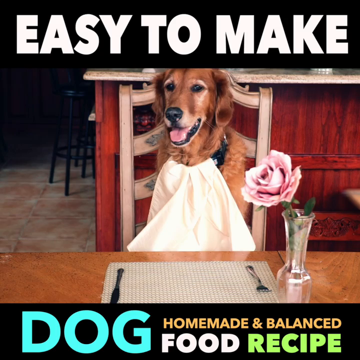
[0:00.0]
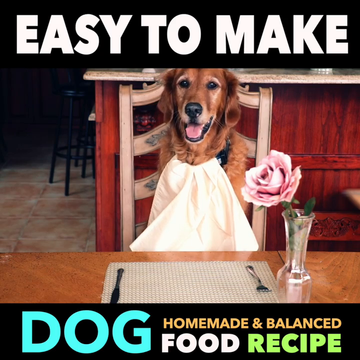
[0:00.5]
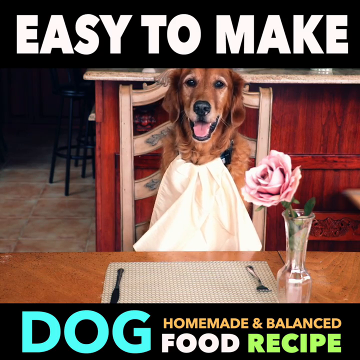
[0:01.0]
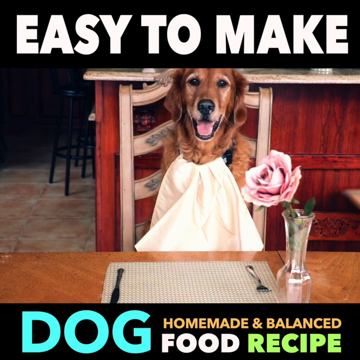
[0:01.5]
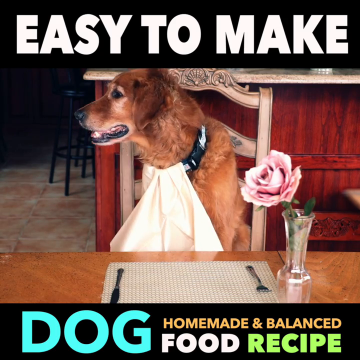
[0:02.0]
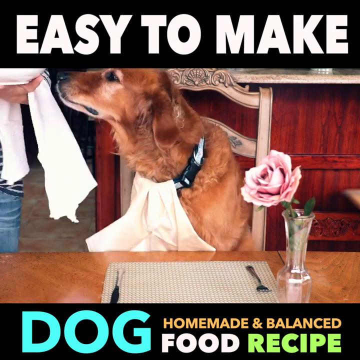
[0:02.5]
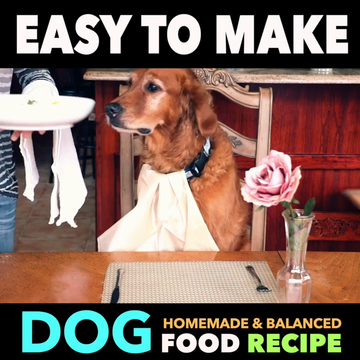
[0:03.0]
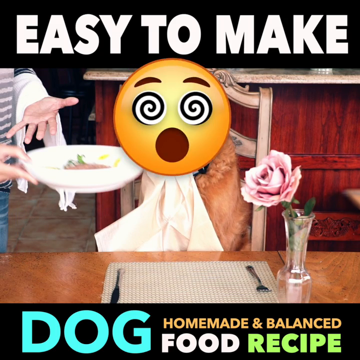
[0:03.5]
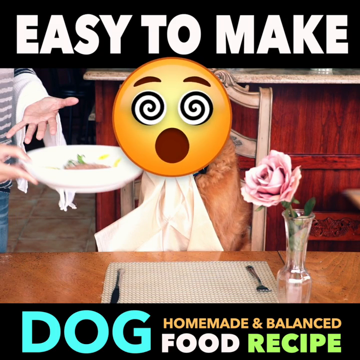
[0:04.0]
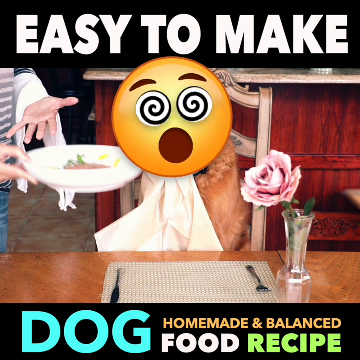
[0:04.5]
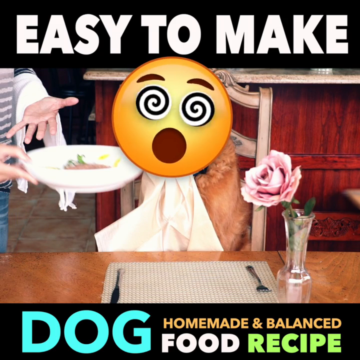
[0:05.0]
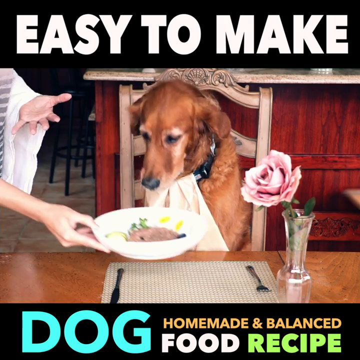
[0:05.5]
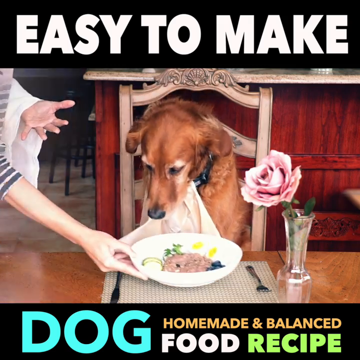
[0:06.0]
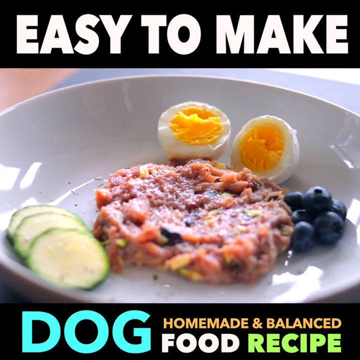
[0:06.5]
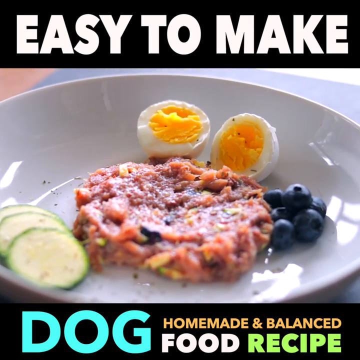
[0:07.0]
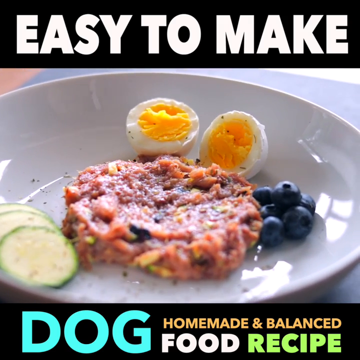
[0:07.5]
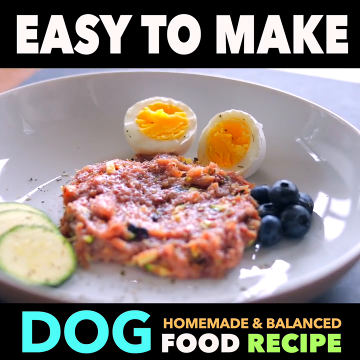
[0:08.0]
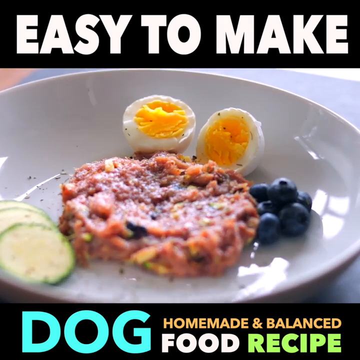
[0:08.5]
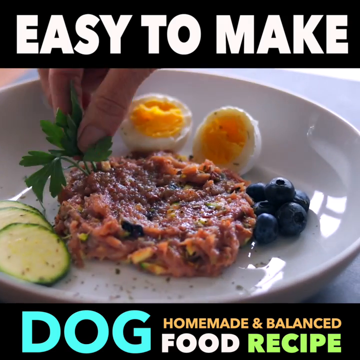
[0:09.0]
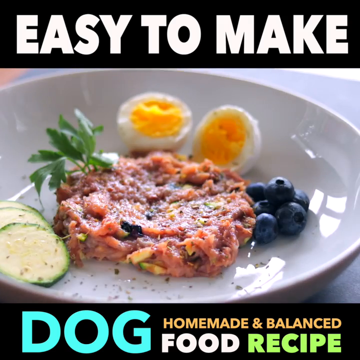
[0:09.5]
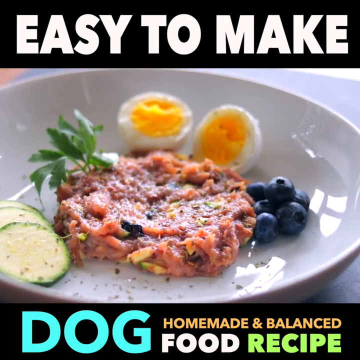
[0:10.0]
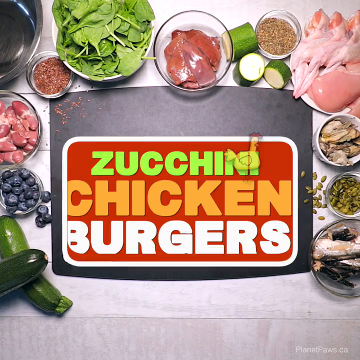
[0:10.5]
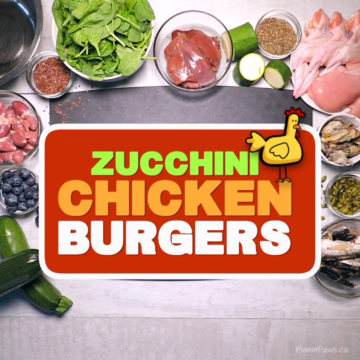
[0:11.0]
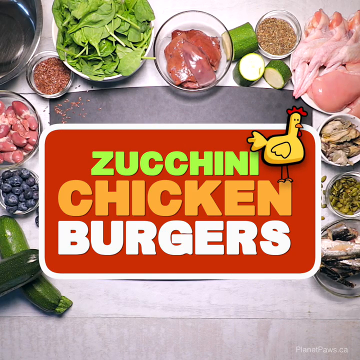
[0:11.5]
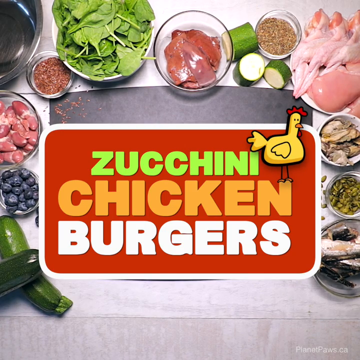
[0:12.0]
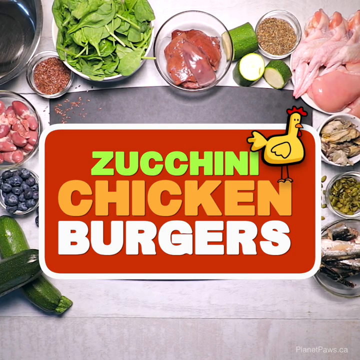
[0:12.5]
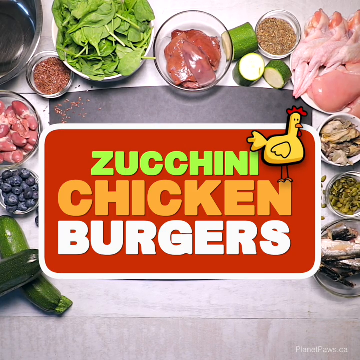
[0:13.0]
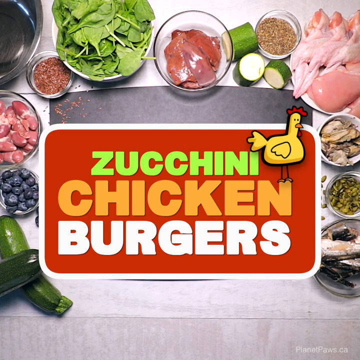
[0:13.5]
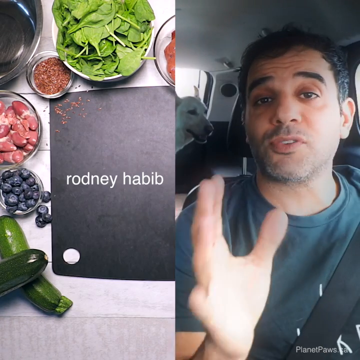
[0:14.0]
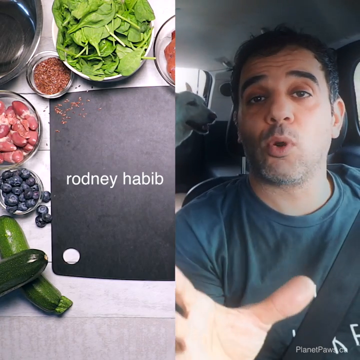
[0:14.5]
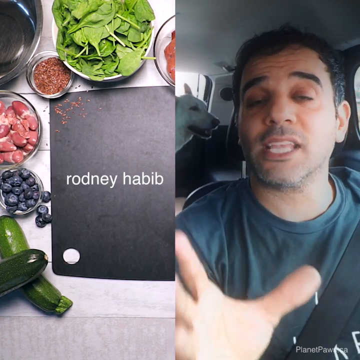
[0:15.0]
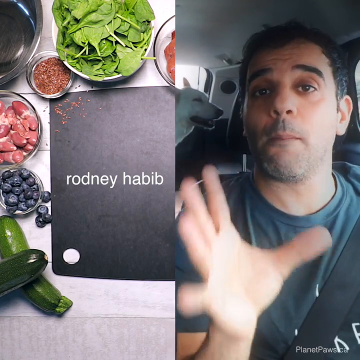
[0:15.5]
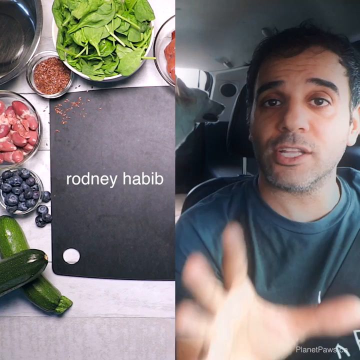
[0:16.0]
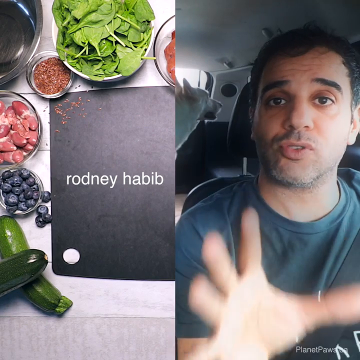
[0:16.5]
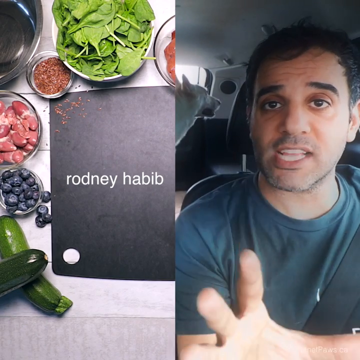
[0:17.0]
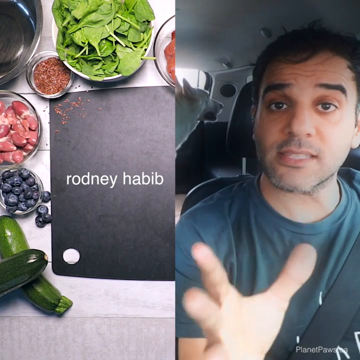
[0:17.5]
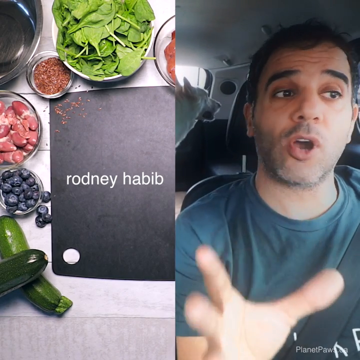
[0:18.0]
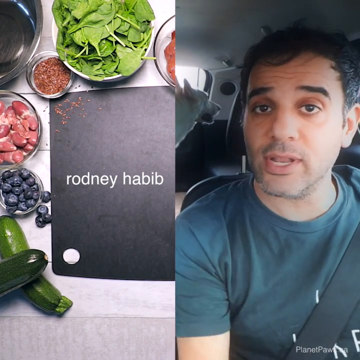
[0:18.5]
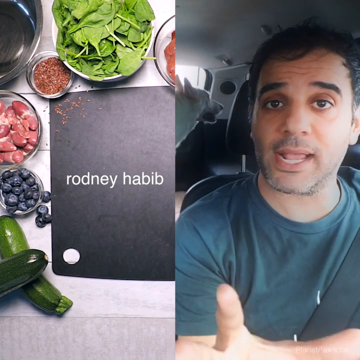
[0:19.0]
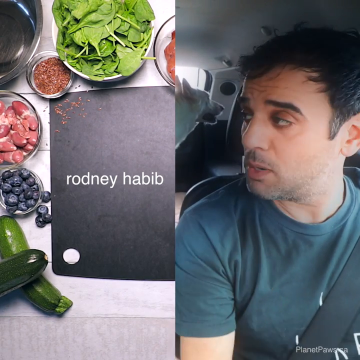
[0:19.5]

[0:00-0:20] What looks like a dog at a table opens a recipe for homemade, balanced dog food. The on-screen text says "zucchini chicken burgers." Rodney Habib is in his car, talking. A dish is put down in front of a golden retriever; it holds two hard-boiled eggs, some blueberries, a chicken burger and some cucumbers. The burger presumably contains chicken and zucchini, and the plate is garnished for the dog.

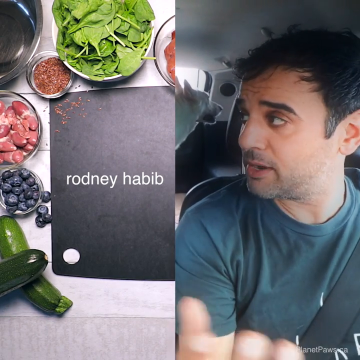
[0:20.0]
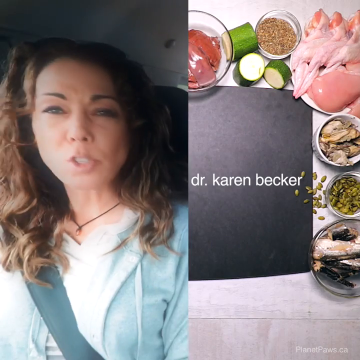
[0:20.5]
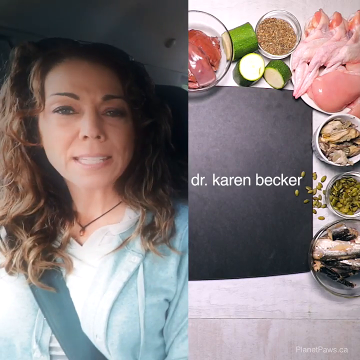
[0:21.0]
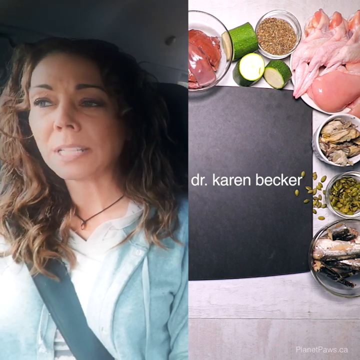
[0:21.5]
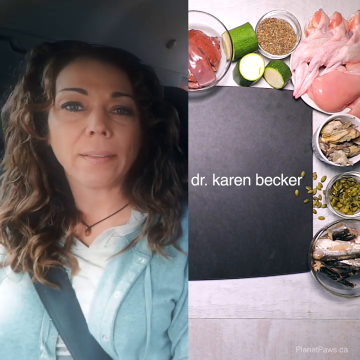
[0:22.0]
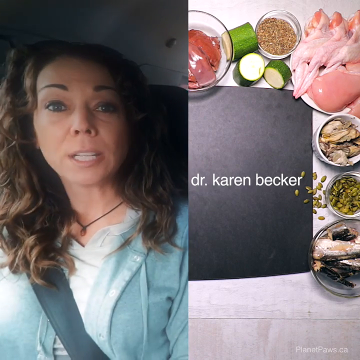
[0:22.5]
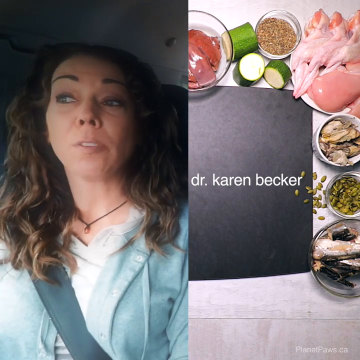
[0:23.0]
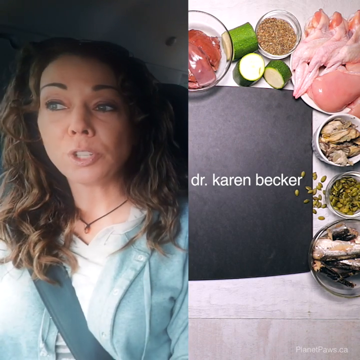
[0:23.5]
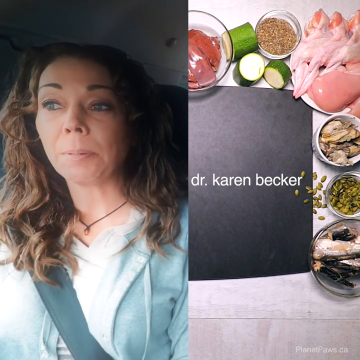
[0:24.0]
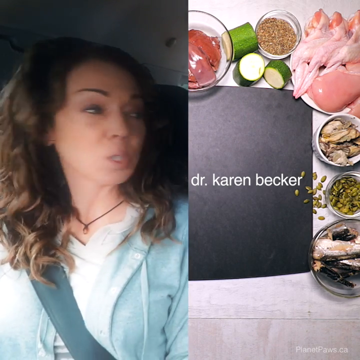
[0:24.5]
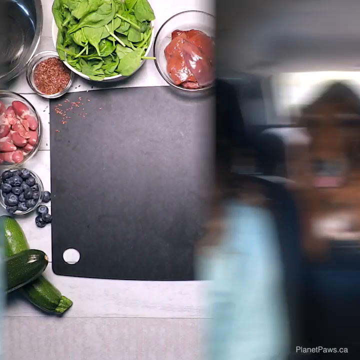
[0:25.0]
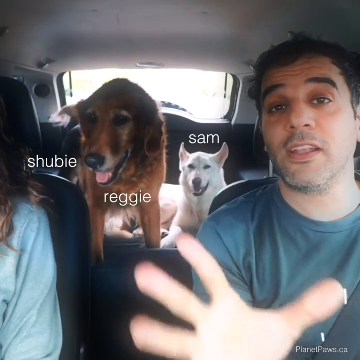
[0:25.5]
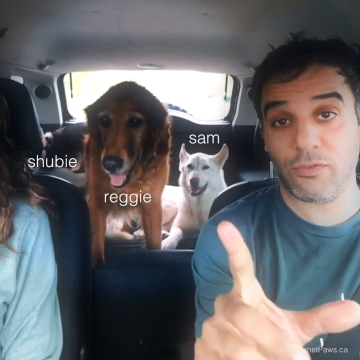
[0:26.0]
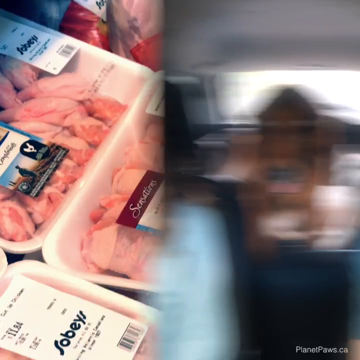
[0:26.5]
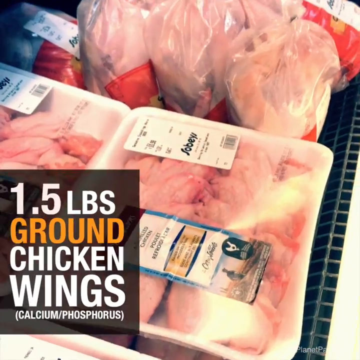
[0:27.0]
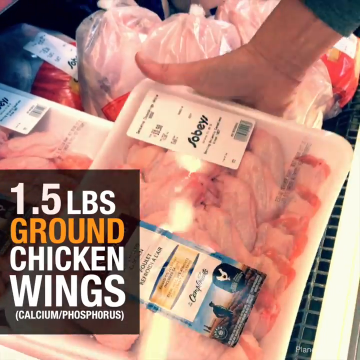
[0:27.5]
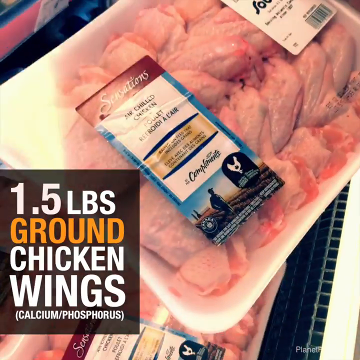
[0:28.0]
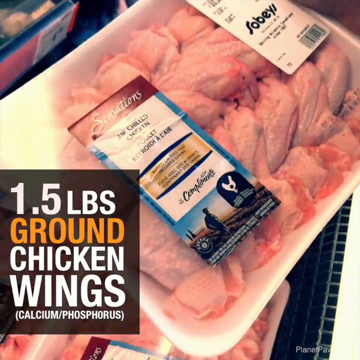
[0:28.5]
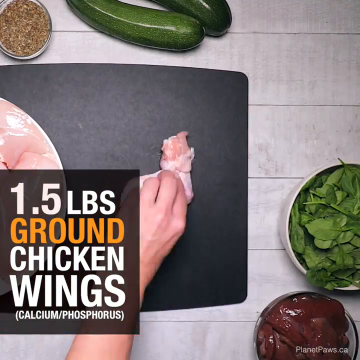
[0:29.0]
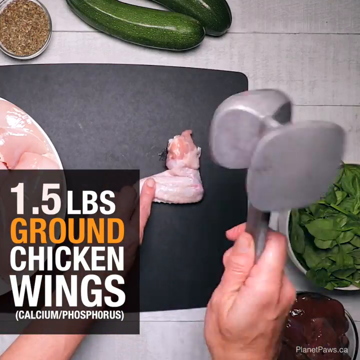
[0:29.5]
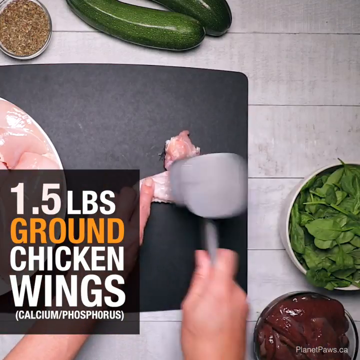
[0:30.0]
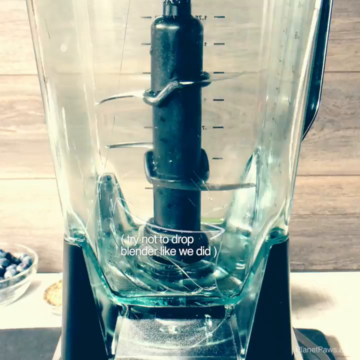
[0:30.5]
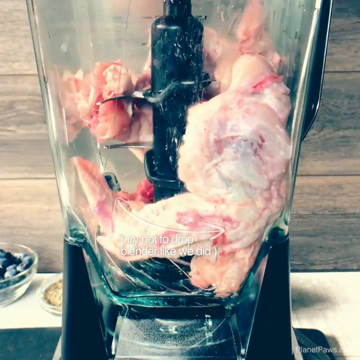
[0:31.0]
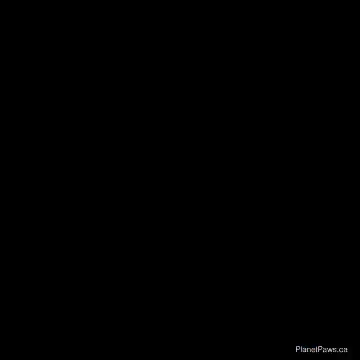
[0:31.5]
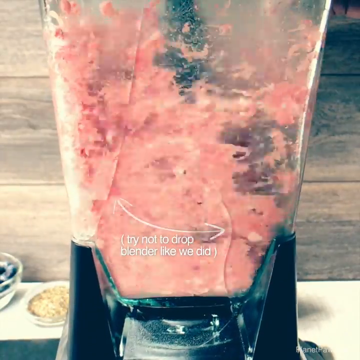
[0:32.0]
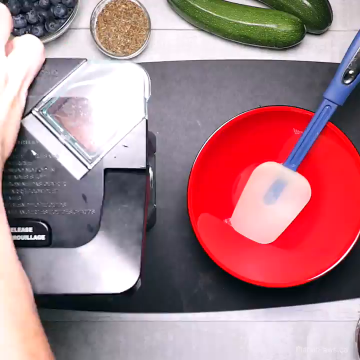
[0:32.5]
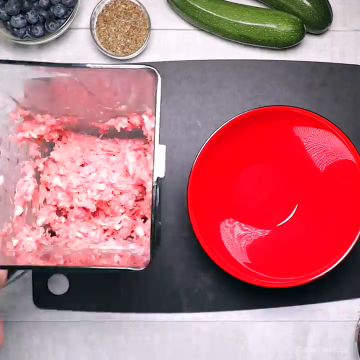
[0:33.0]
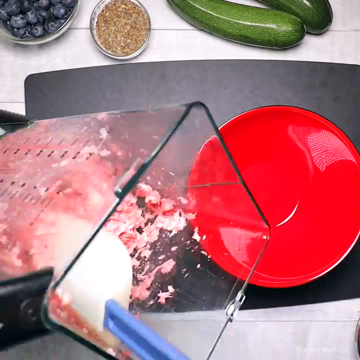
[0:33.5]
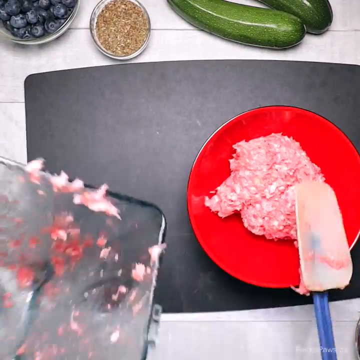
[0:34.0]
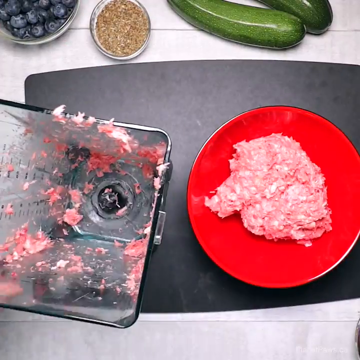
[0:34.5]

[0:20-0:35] A woman, Dr. Karen Becker, appears, along with a man who has the dogs in the car; the dogs are possibly Sam and Reggie. The talking takes place in the car, while the cooking seems to be in a kitchen. A pound and a half of chicken, which looks like chicken wings, has been pounded with a mallet and is put into a blender, bones included. The woman then talks again.